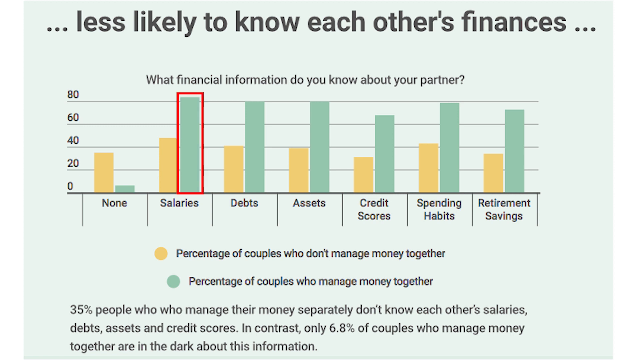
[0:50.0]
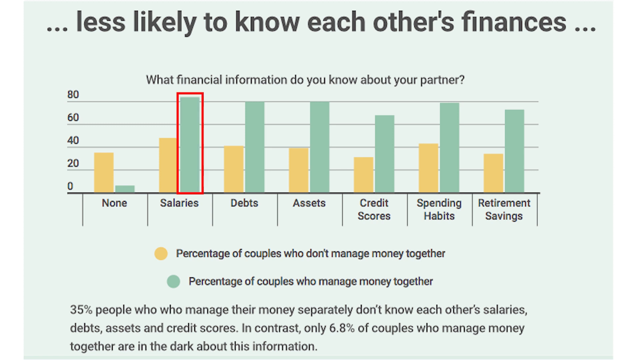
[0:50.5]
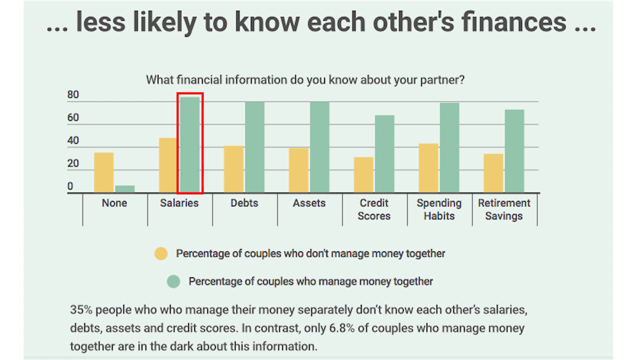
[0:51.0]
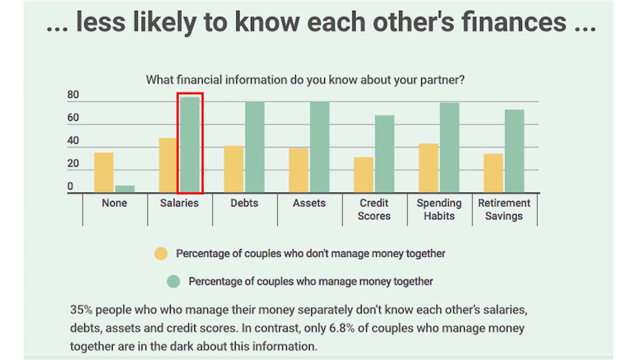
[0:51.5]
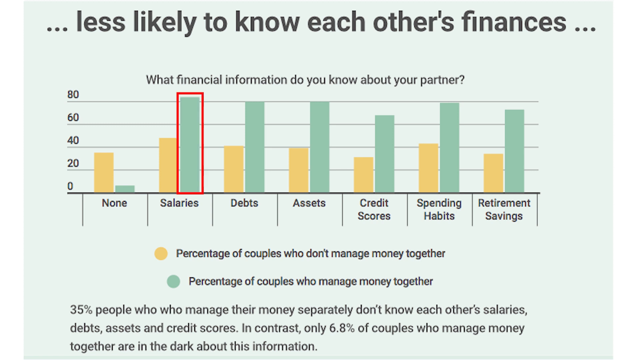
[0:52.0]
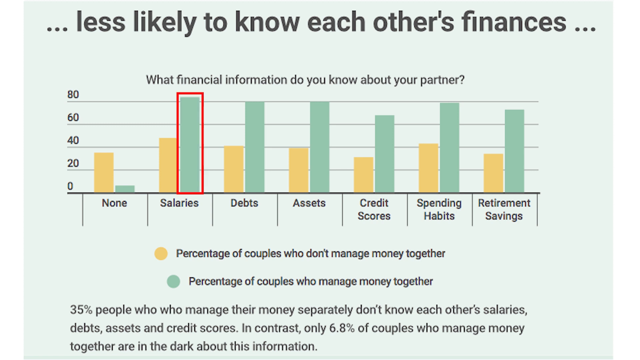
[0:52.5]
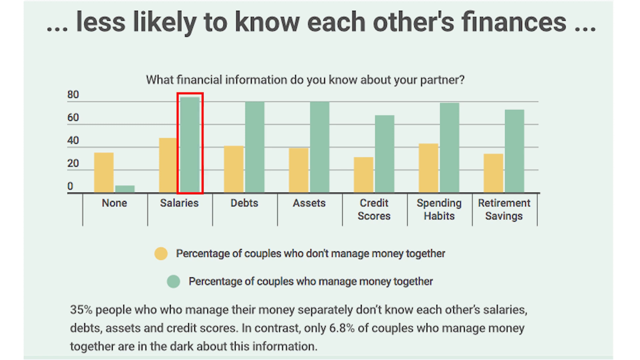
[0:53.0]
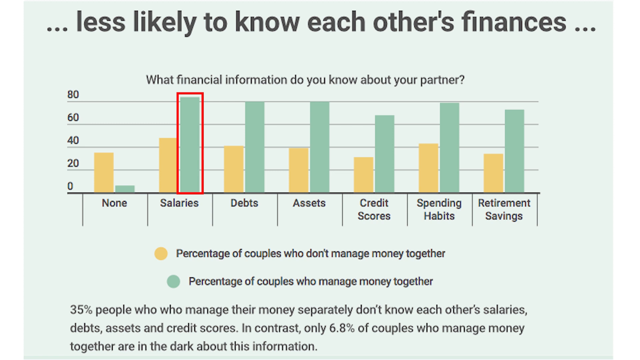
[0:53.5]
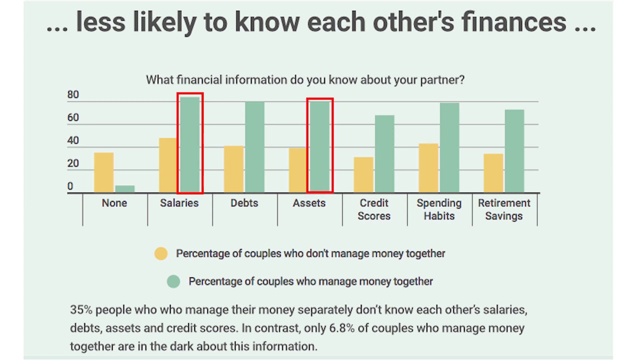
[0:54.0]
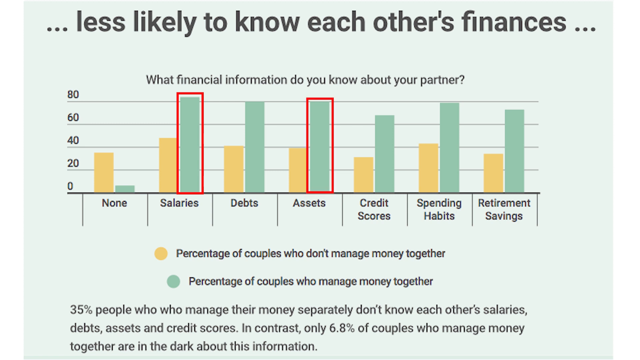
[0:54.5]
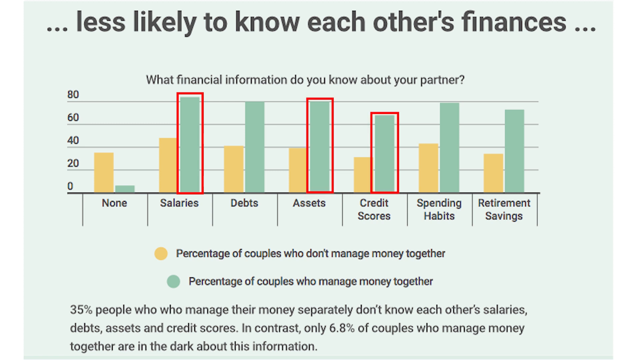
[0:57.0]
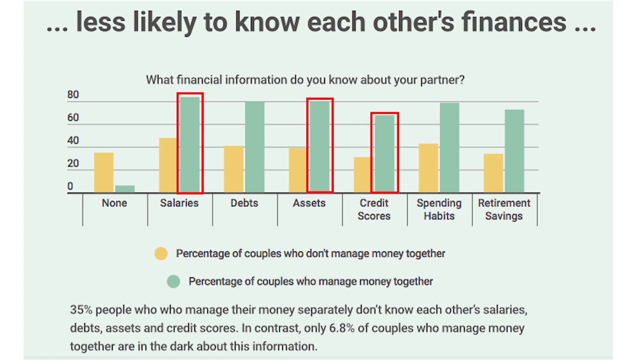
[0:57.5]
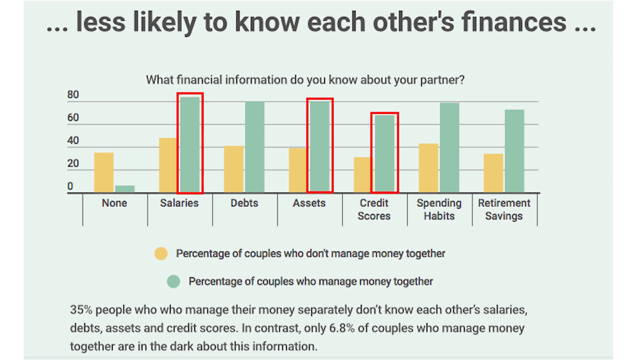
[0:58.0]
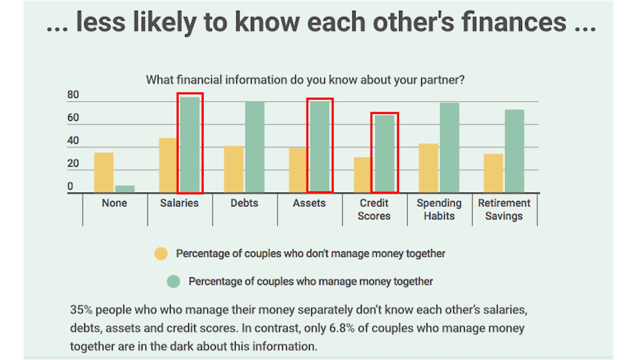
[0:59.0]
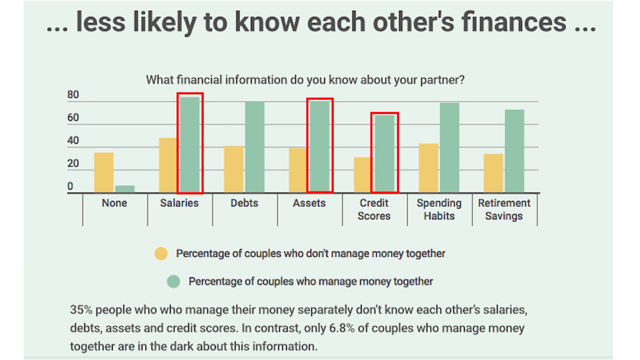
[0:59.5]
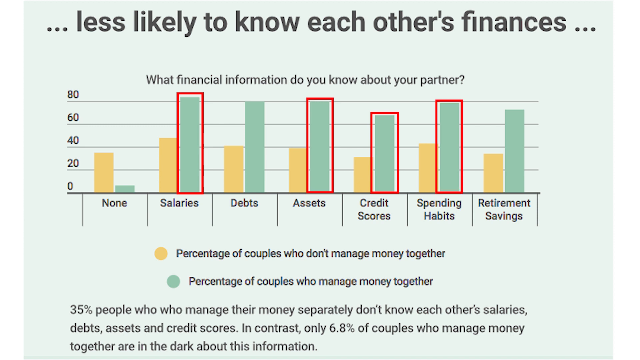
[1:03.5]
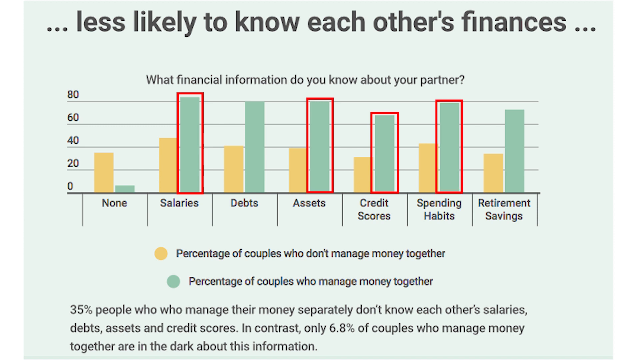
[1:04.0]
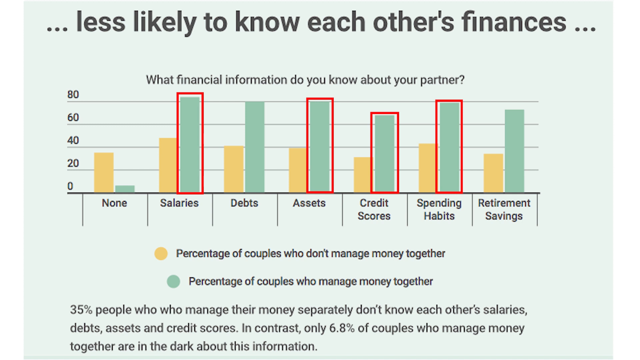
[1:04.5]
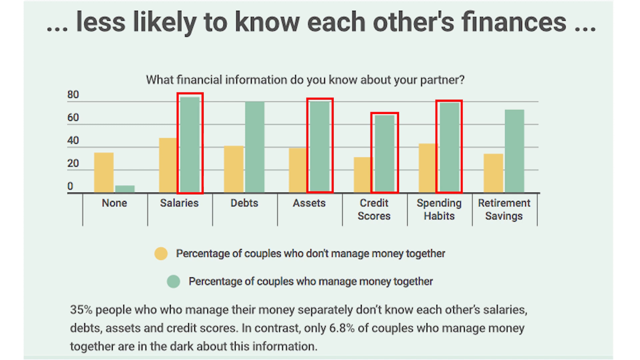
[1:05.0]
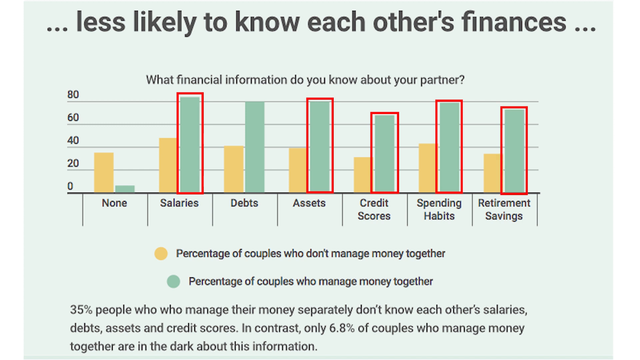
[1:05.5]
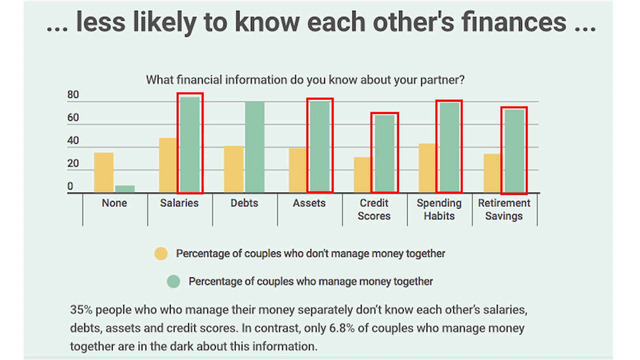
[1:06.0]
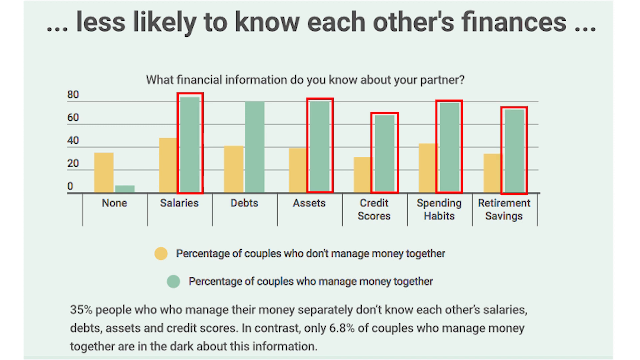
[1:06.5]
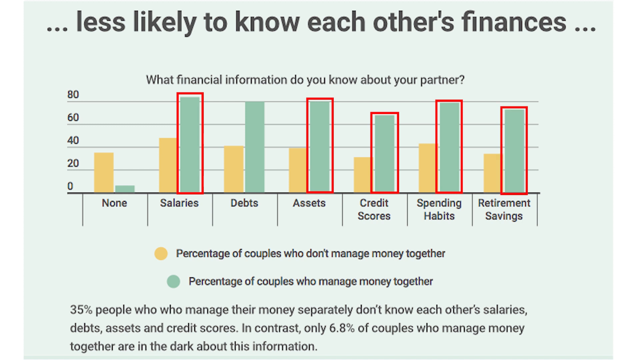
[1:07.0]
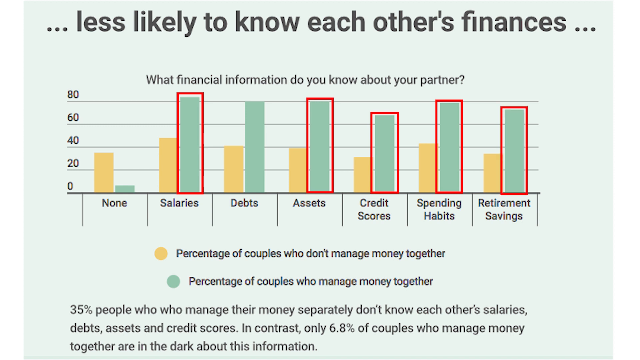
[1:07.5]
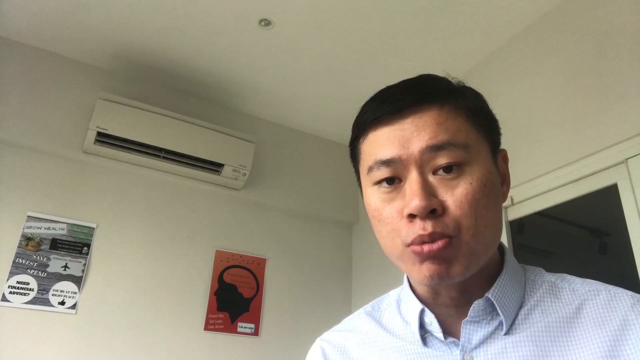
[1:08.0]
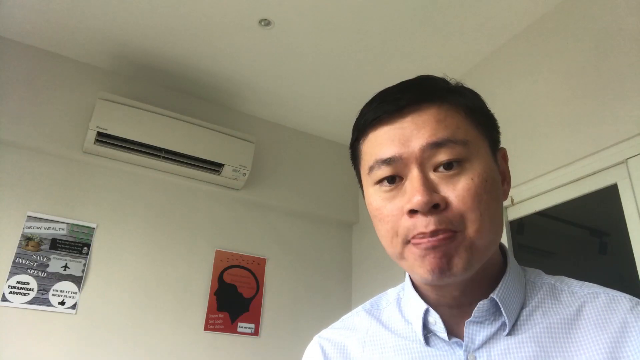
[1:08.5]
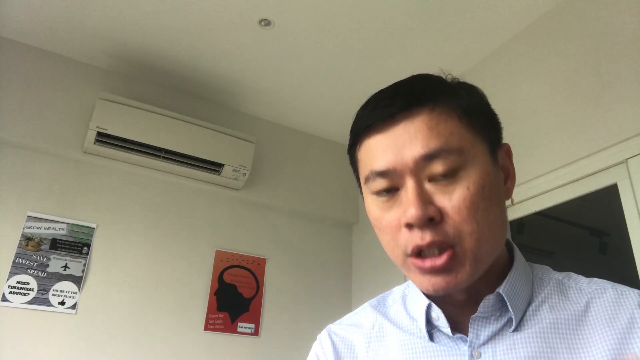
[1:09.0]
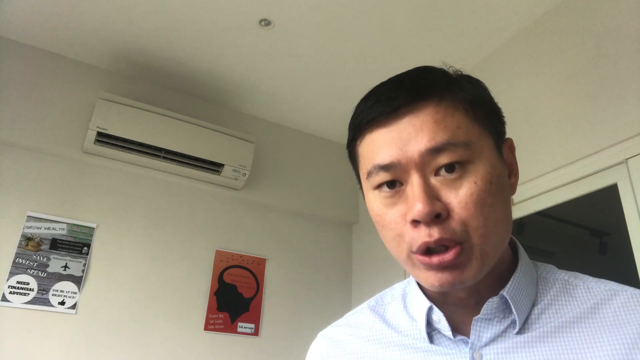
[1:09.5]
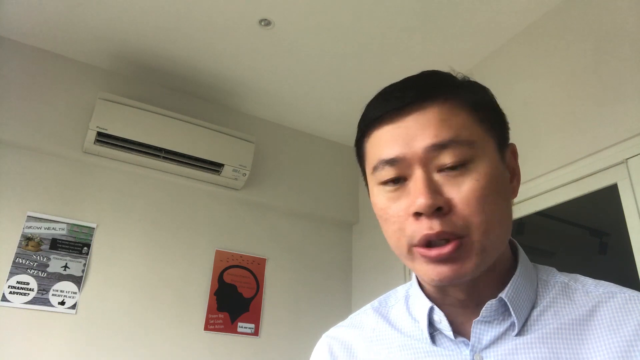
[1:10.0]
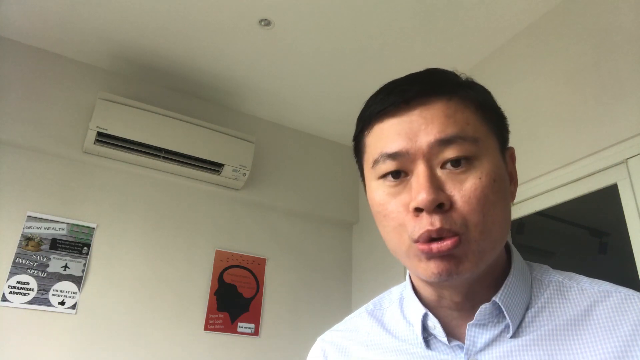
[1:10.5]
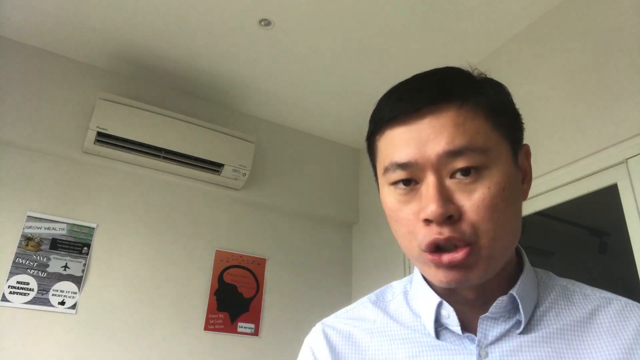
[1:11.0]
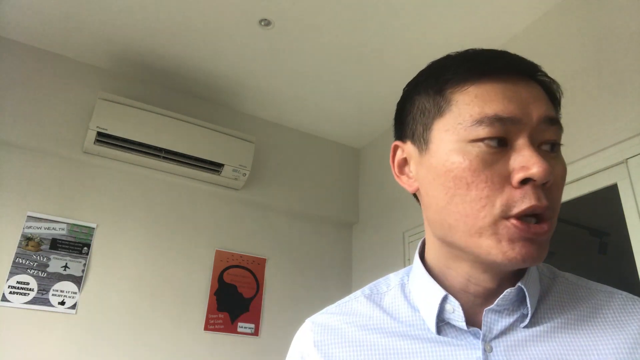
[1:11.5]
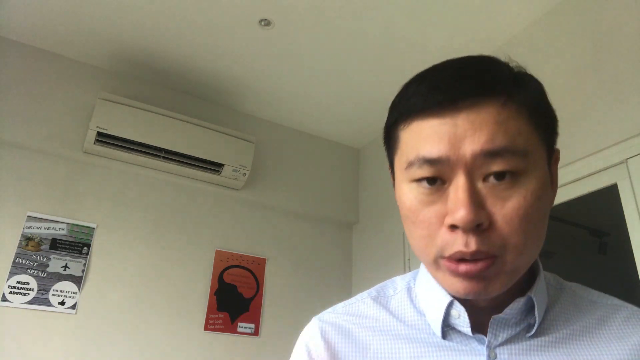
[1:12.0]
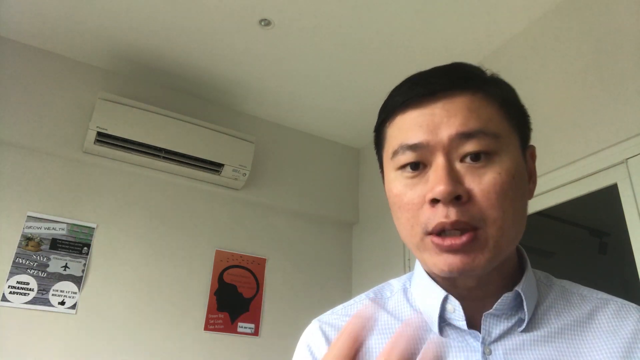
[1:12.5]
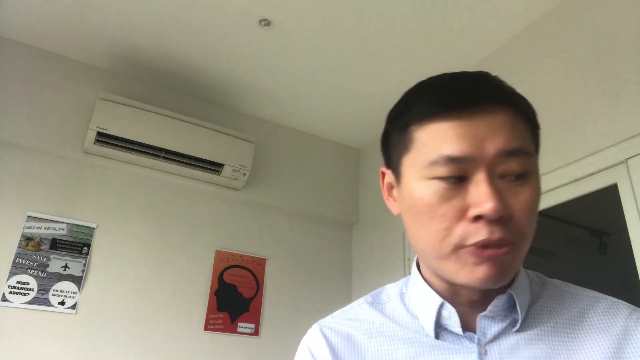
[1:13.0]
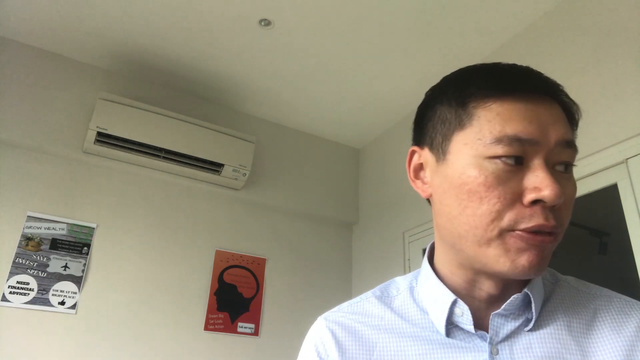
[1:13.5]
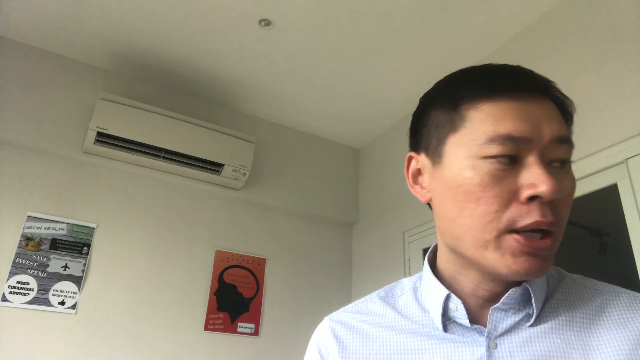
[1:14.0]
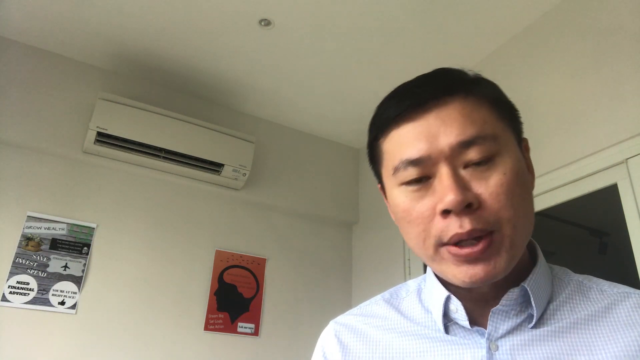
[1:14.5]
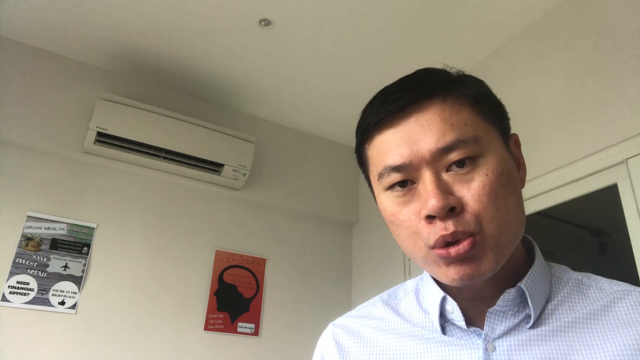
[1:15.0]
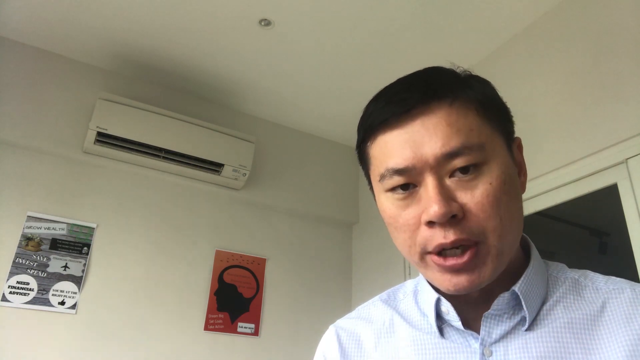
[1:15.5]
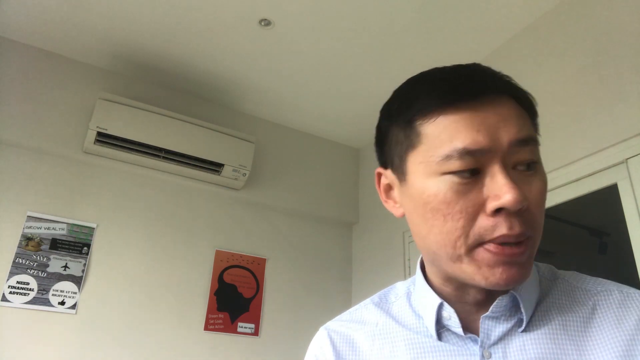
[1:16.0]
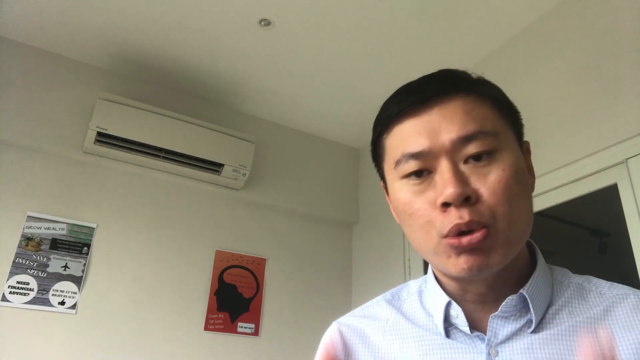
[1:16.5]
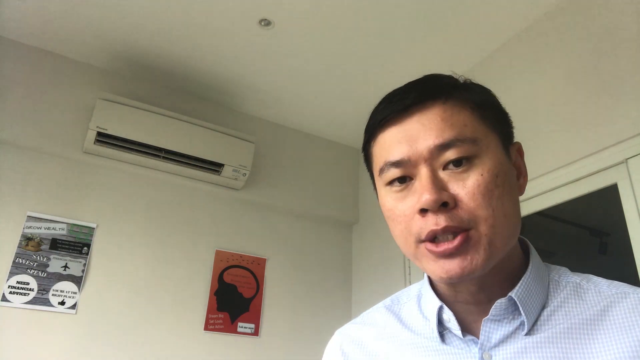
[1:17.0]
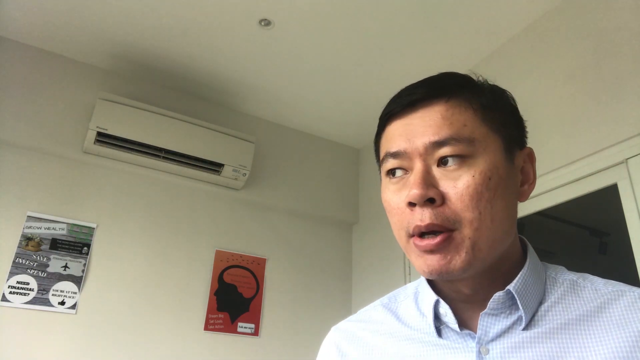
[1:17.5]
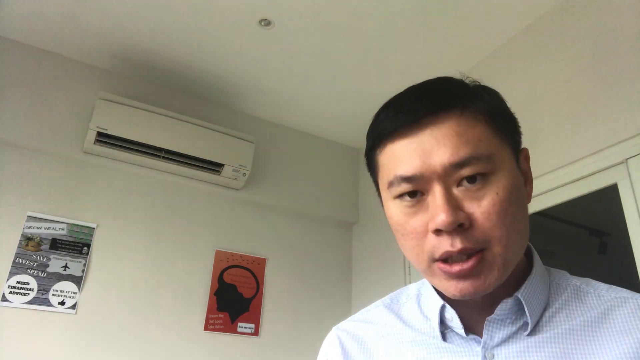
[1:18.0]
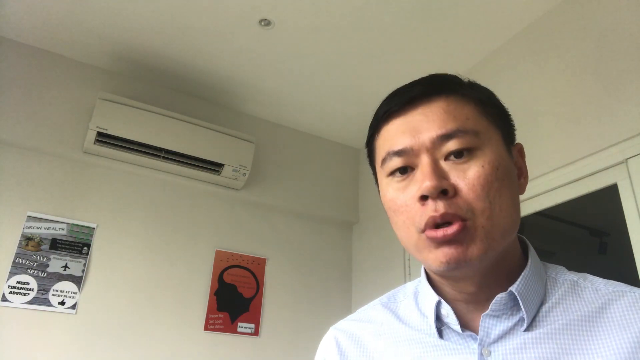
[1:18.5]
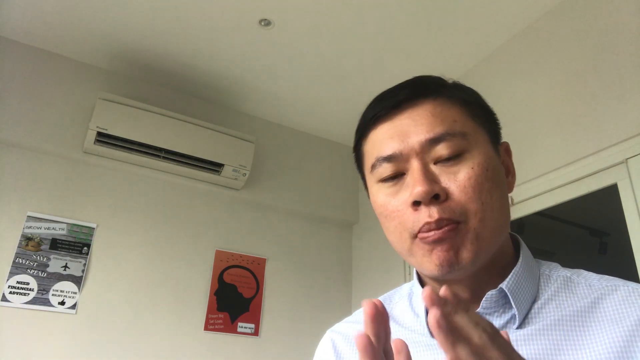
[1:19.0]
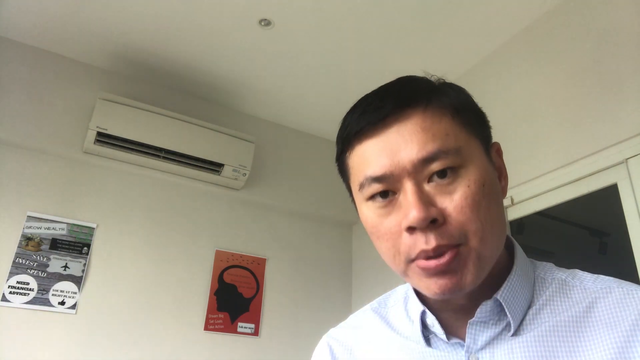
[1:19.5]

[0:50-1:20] At the very top, text reads "...less likely to know each other's finances...". The question is centered above the bar graph, which has 0, 20, 40, 60 and 80 in 20-point increments. Vertical lines separate each category: salaries, debts, assets, credit scores, spending habits and retirement savings, with the last three each written on two lines. The legend is spaced out, with a yellow circle and a green one. Underneath, text reads "35% of people who manage their money separately don't know each other salaries debts assets and credit scores", compared with 6.8% for the other group. The green bars for assets and credit scores are highlighted, as well as spending habits and retirement. The video goes back to the man speaking; he looks up to the side a little and makes a few gestures, but mostly does not hold his hands up much as he talks to the viewer. Behind him, on kind of his left side, is what seems to be a sliding door, with a white frame and glass.